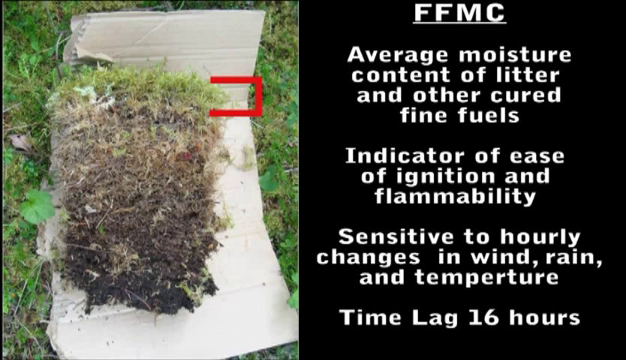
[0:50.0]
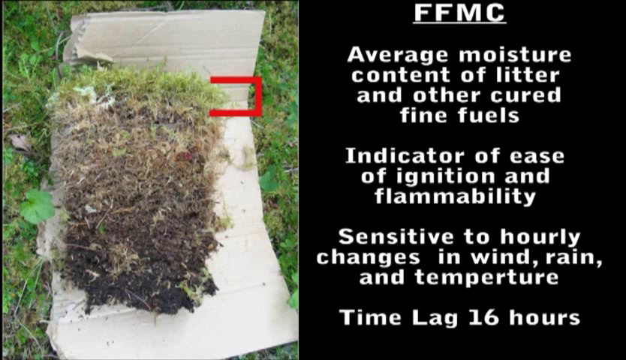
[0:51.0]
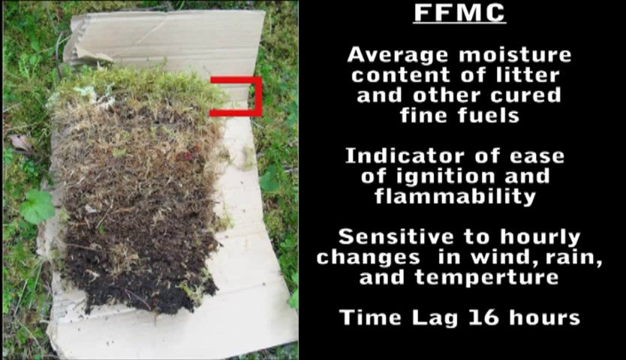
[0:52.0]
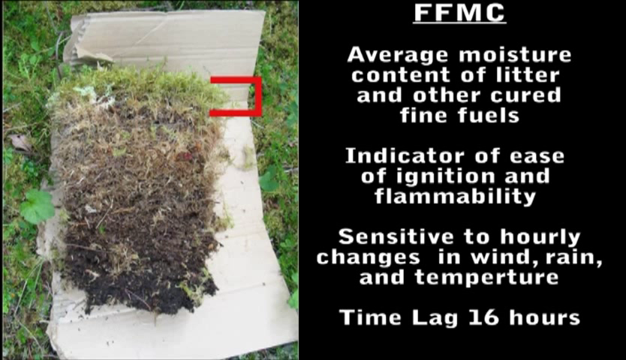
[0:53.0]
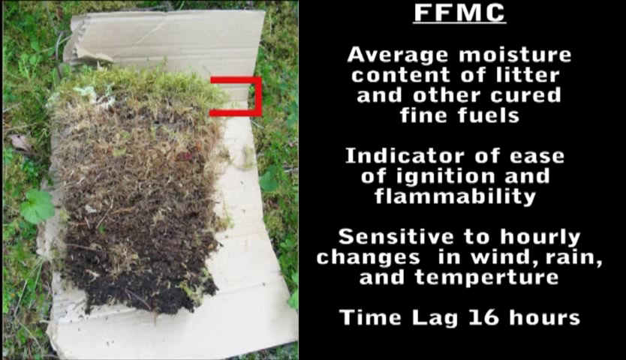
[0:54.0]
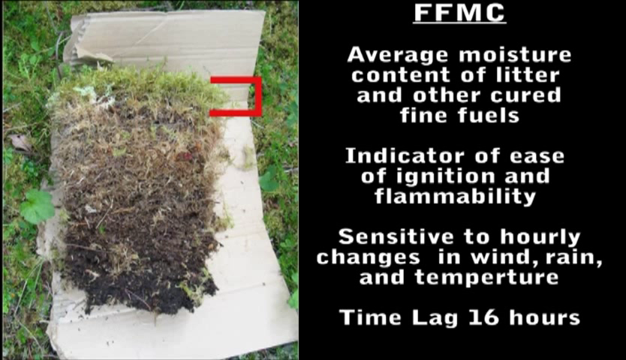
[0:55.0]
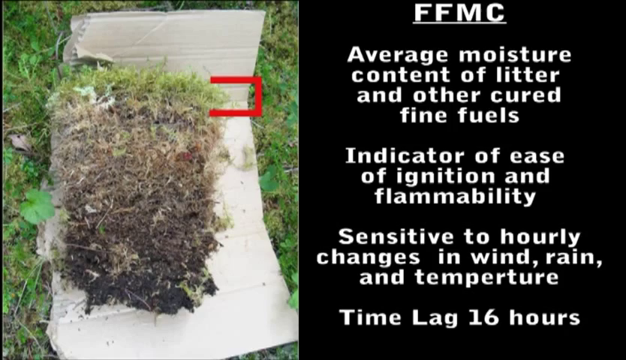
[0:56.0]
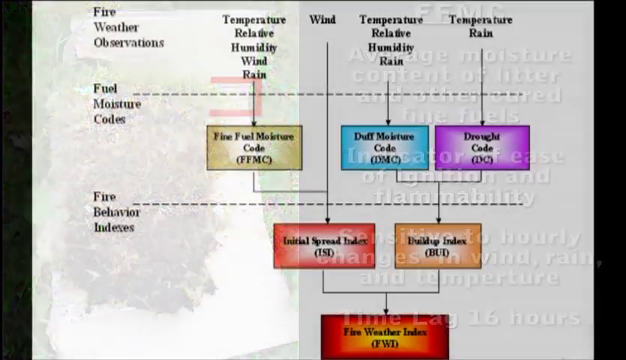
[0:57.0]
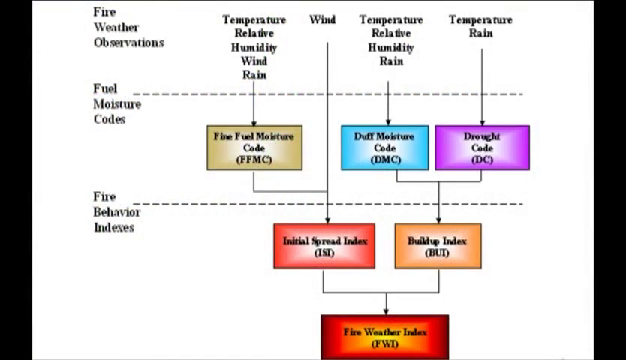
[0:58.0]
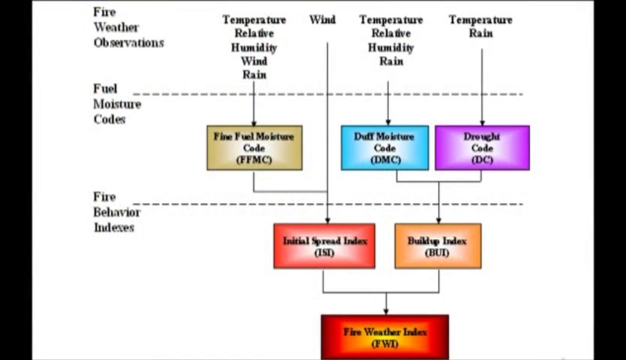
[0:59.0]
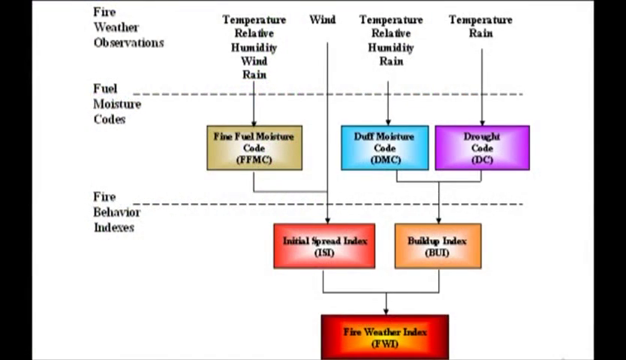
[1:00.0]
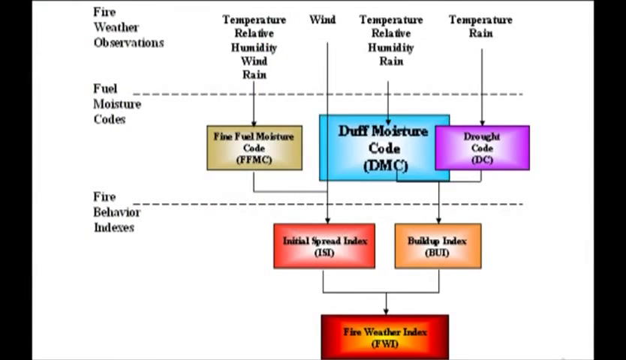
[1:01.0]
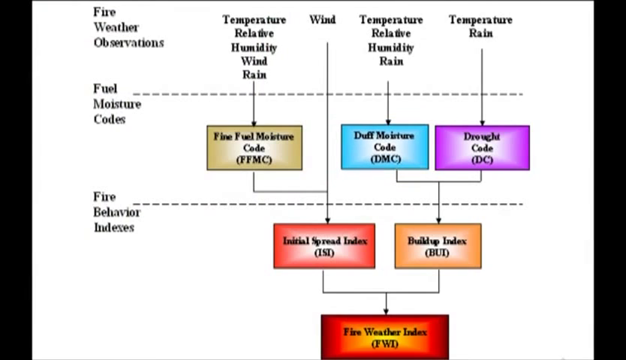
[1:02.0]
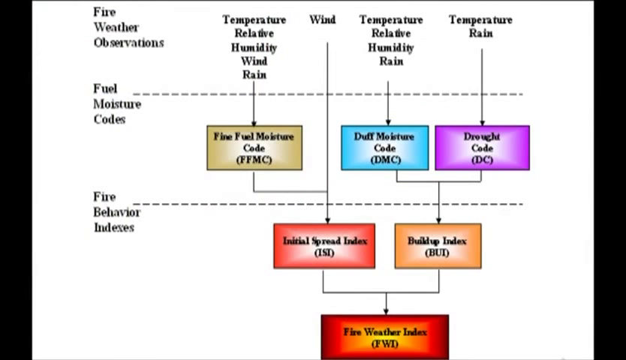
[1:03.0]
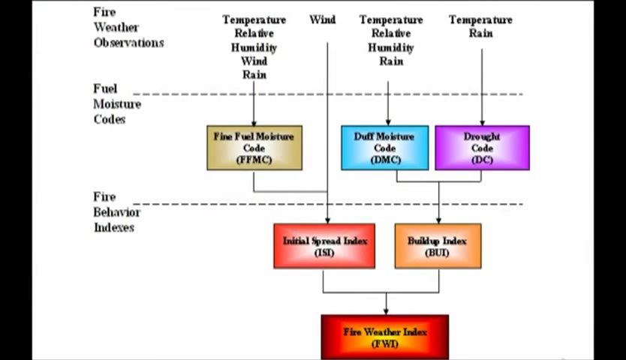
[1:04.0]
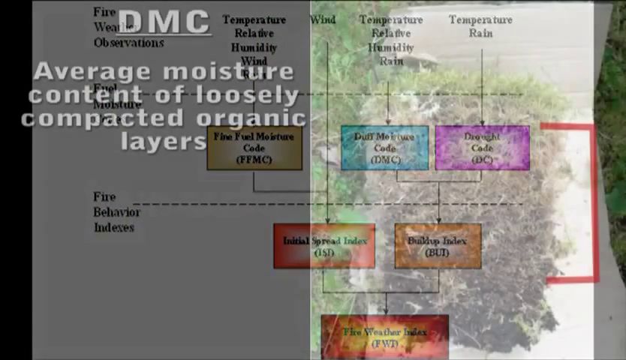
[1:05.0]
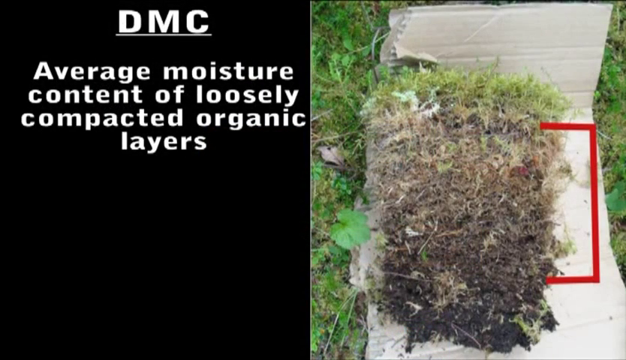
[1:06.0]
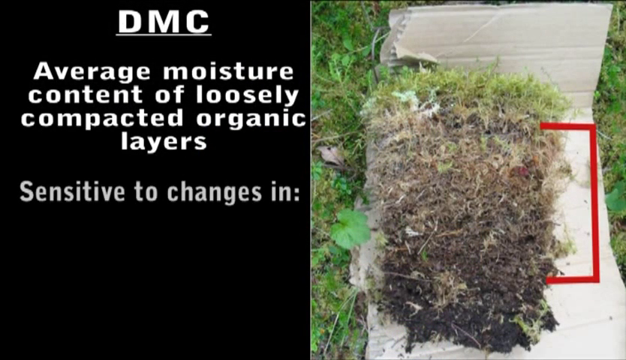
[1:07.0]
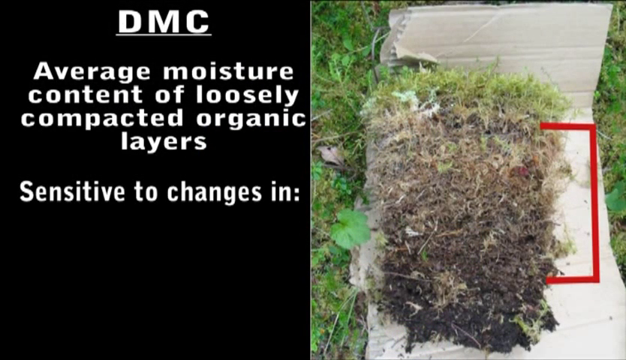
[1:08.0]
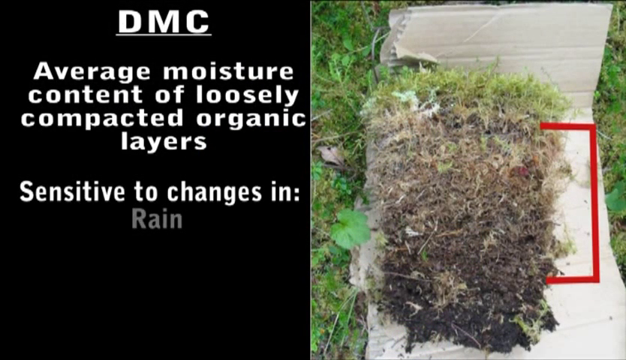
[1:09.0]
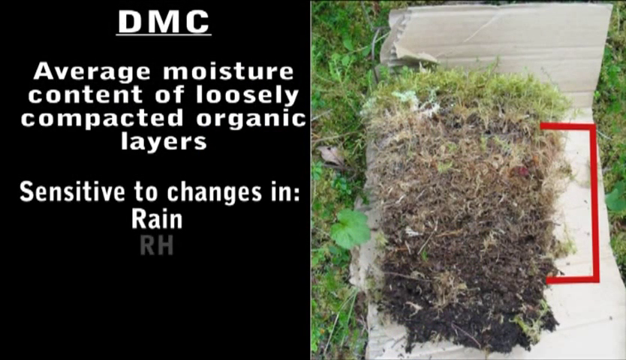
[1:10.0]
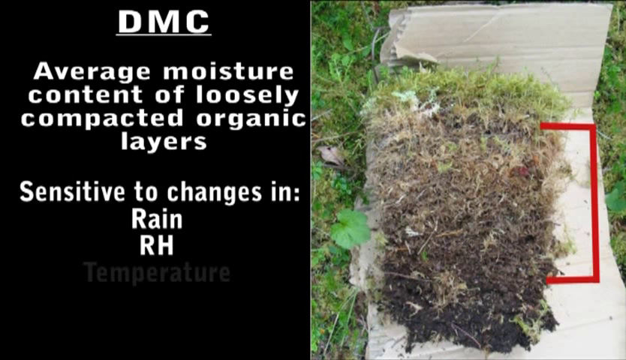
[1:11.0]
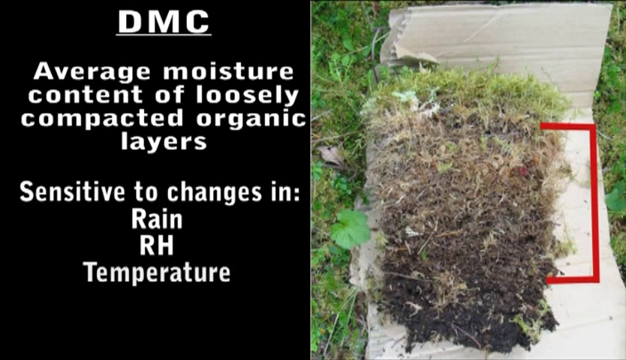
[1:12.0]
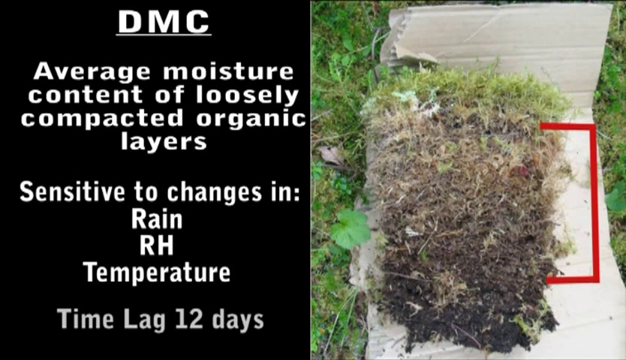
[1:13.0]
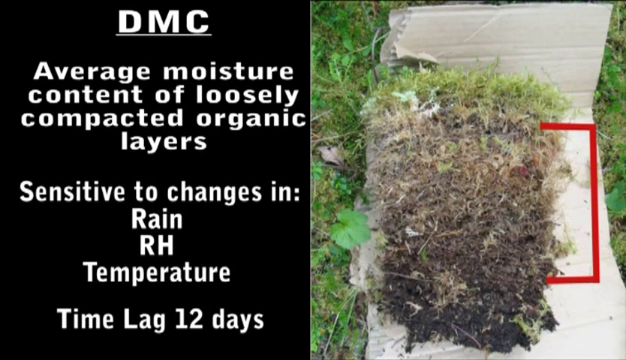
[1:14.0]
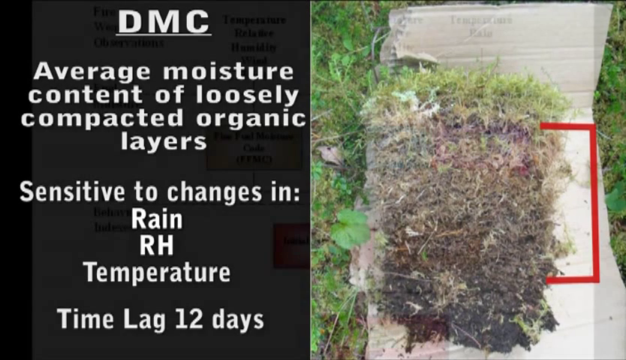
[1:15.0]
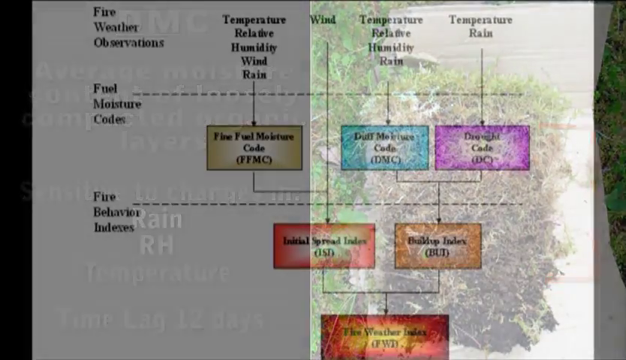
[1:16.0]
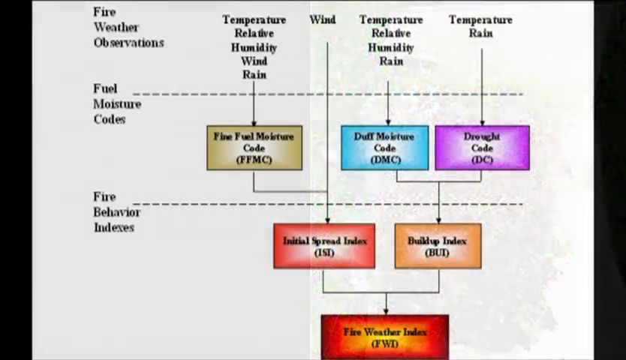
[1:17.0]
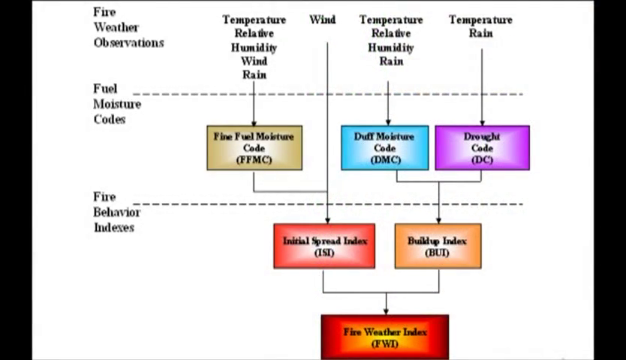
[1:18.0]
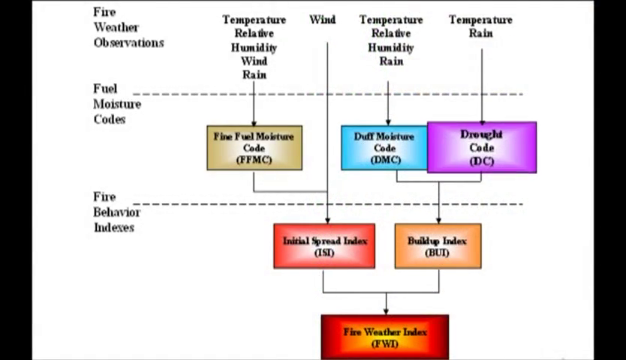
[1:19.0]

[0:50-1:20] A split screen shows, on the left, a picture of what looks to be a piece of cardboard laid out with soil and grass on top of it, like a cross section that has been dug out, where the deep soil roots and the grass growing at the top are visible. A red outline runs from the top of the grass to the top of the soil. To the right, white letters read "FFMC," then "average moisture content of litter and other cured fine fuels," then "indicator of ease of ignition and flammability," then "sensitive to hourly," and then "time lag, 16 hours."